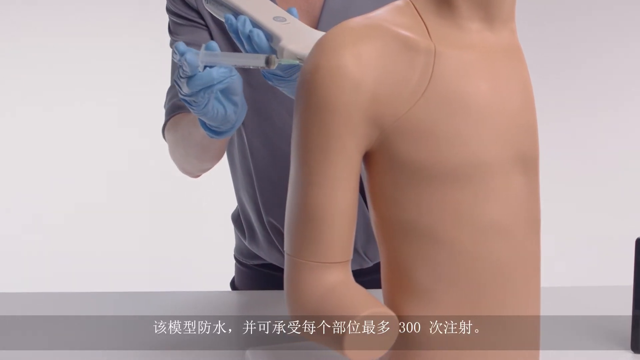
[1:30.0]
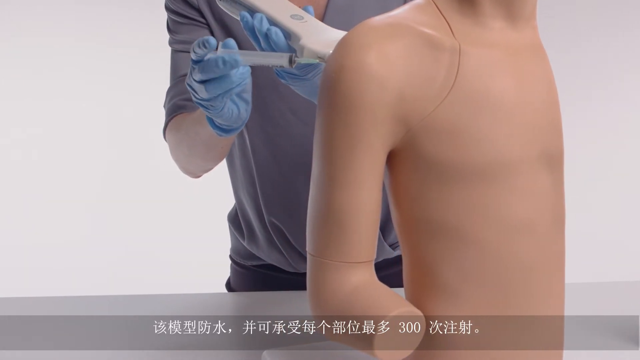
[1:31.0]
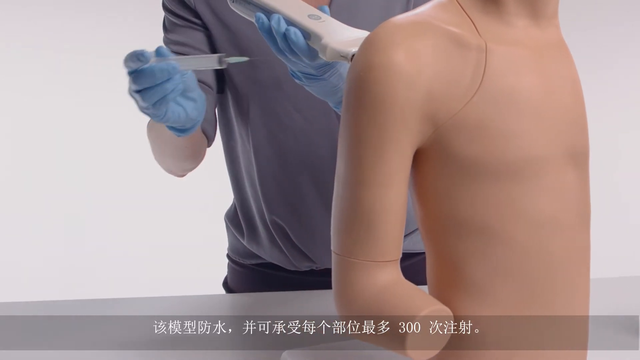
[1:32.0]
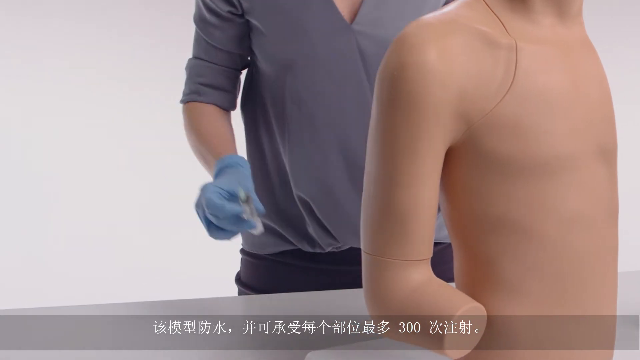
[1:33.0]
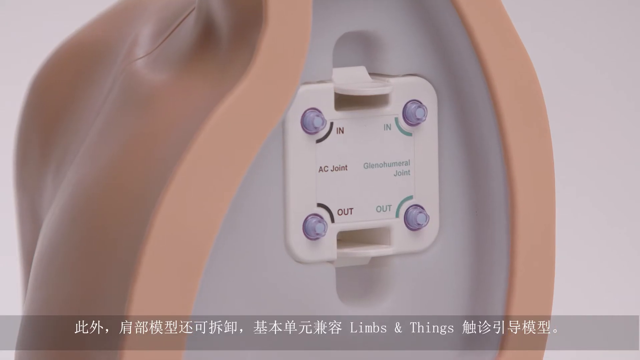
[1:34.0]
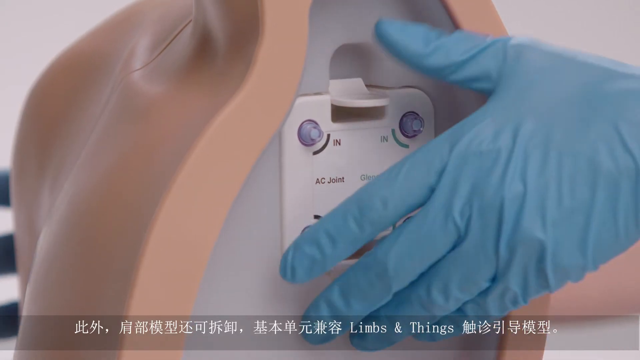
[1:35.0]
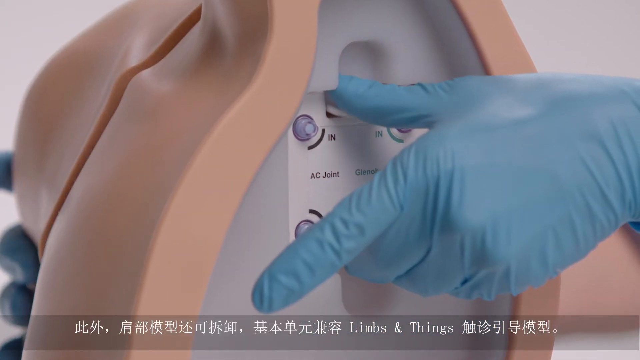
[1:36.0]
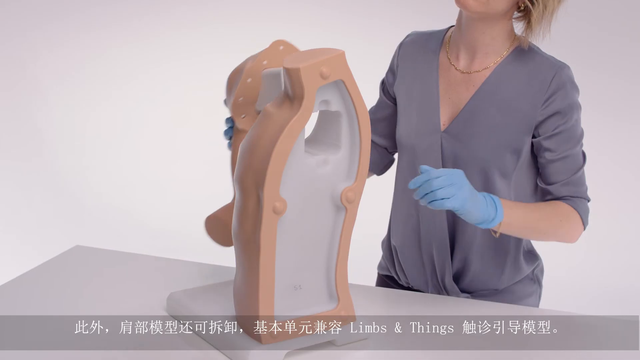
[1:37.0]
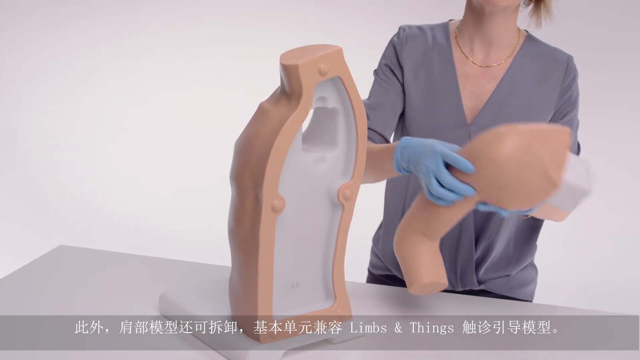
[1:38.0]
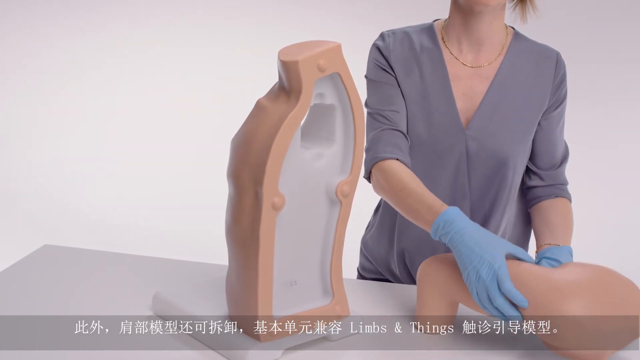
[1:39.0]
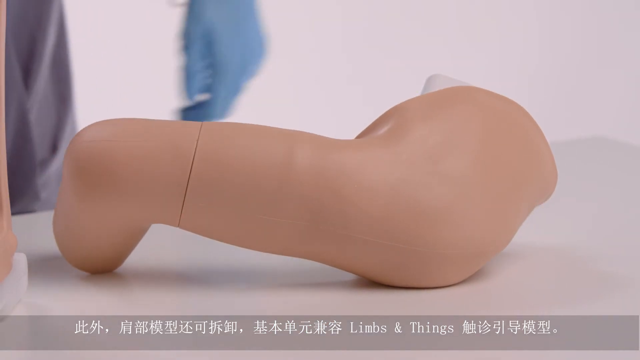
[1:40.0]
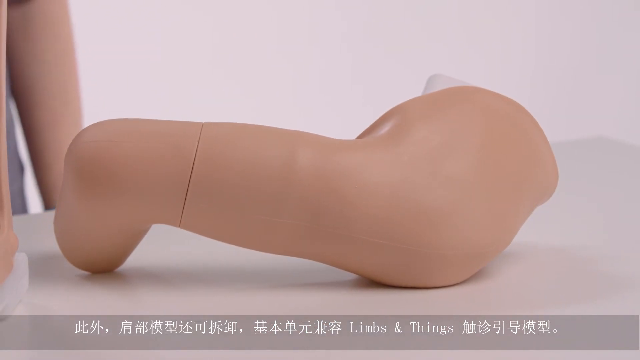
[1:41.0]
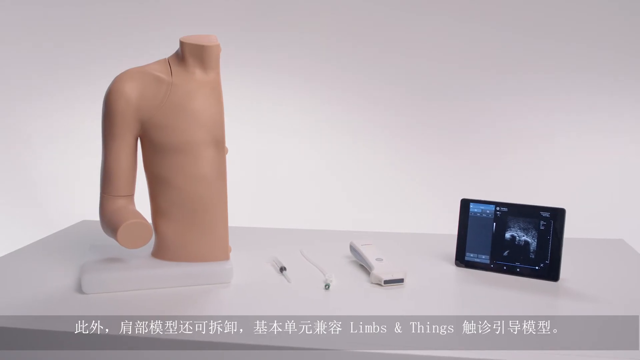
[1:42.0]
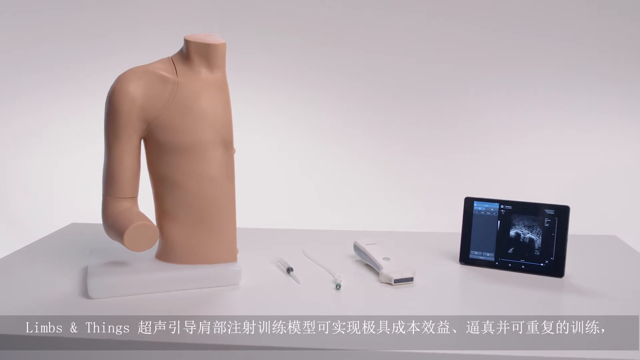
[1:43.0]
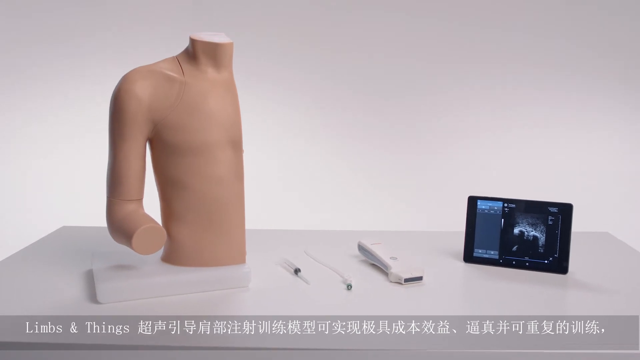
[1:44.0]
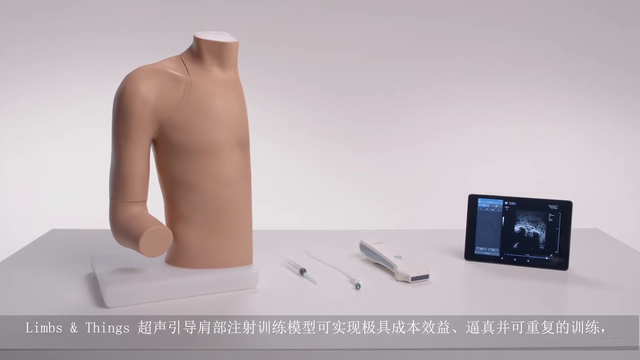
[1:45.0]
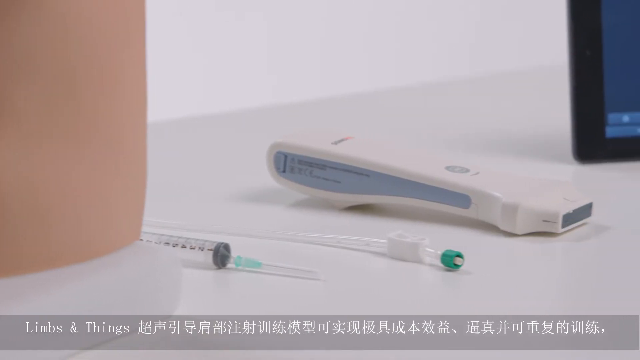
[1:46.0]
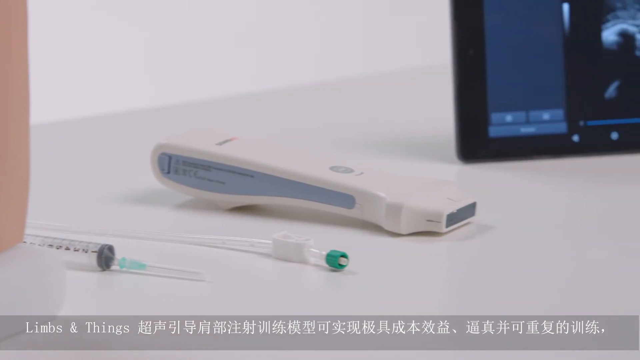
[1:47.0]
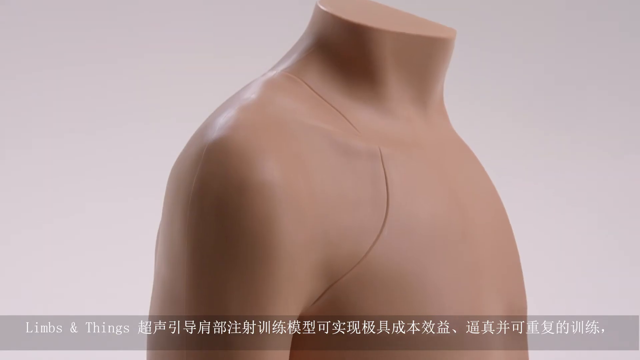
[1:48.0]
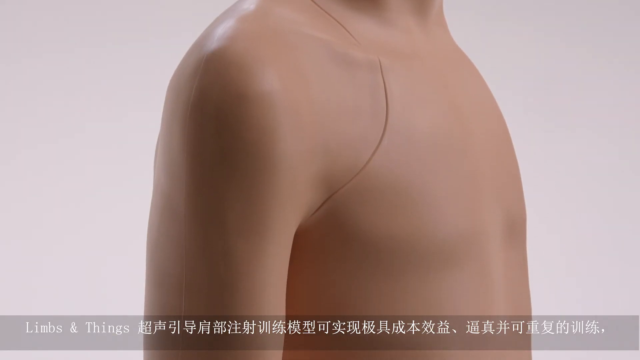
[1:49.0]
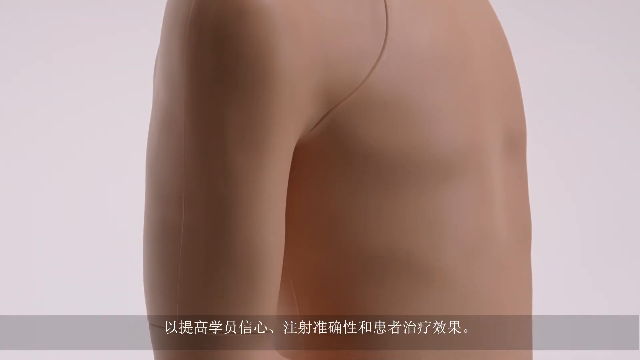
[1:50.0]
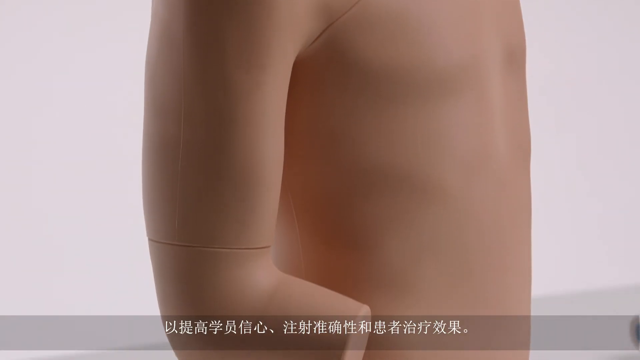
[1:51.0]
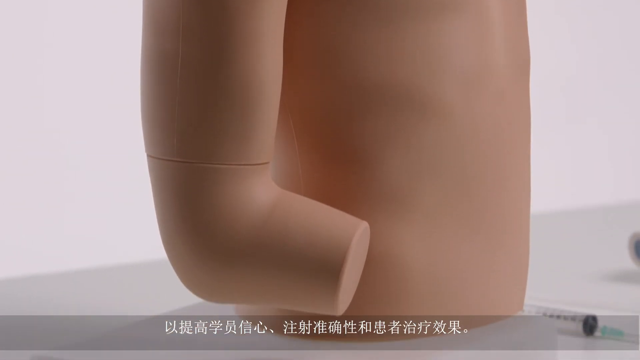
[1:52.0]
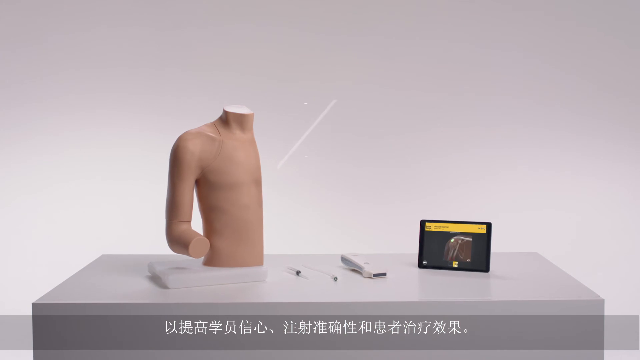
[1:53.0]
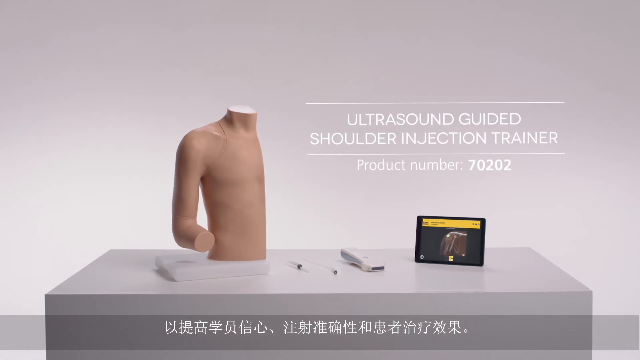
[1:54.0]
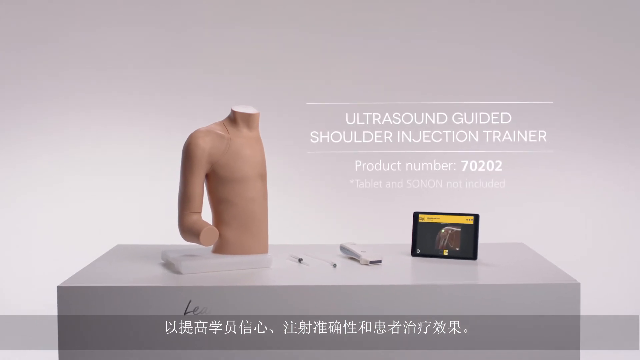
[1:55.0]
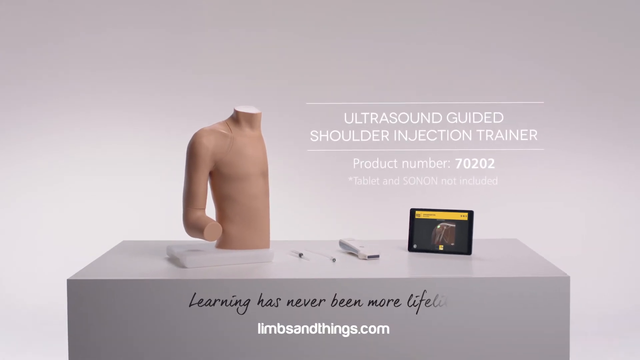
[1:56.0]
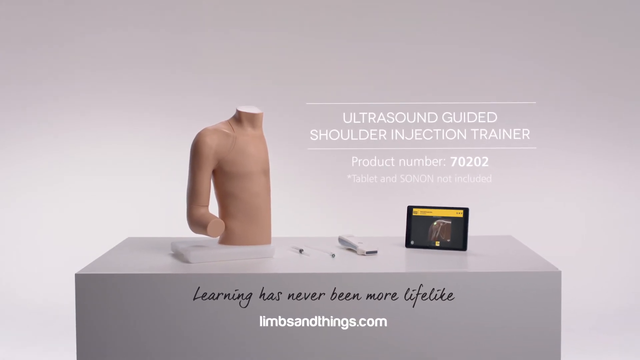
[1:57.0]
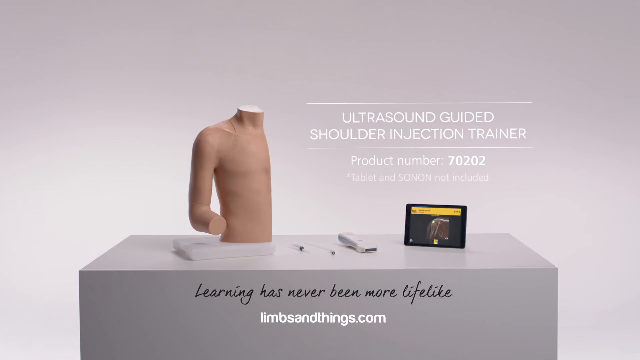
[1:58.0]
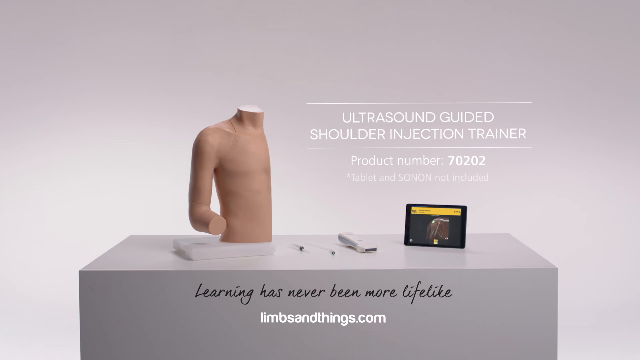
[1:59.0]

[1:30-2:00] A nurse holds a portable scanner in her left hand against the dummy's right shoulder and a syringe with a needle in her right hand, about to inject the dummy. Next, the side of the dummy where it has been cut in half shows the inside of the torso, where there is a little instrument pad with some dials or knobs. The nurse presses two buttons and some sort of switch, and the arm of the dummy becomes unattached from the torso; she takes it off and lays it on the table. Next, the dummy is shown with the syringes with needles, the portable scanner device, and the iPad showing the shoulder scan next to it, with some Asian alphabet writing at the bottom of the image. A close-up of these items and the torso follows. Finally, the screen reads "ultrasound guided shoulder injection trainer" with a product number, and at the bottom "learning has never been more lifelike" and "limbsandthings.com".